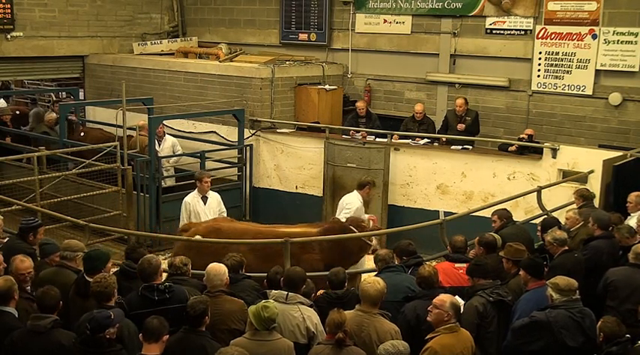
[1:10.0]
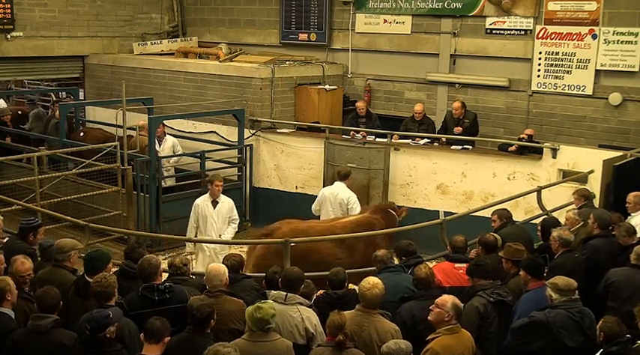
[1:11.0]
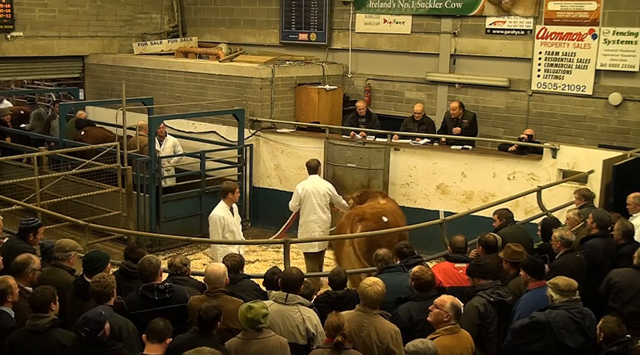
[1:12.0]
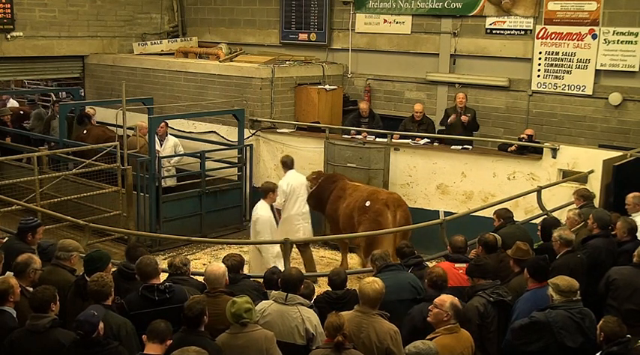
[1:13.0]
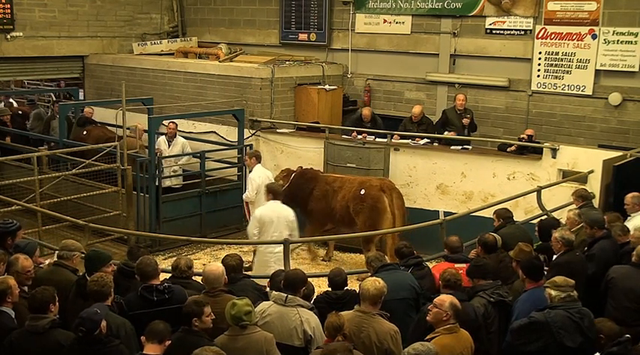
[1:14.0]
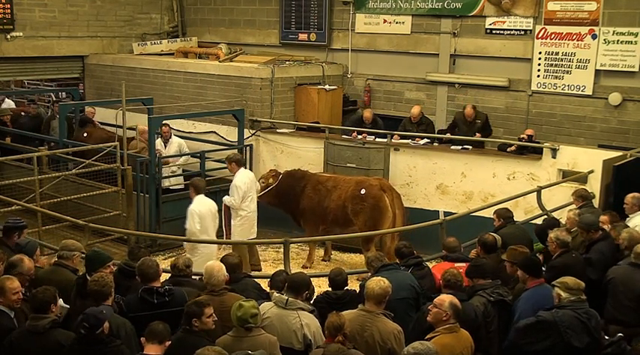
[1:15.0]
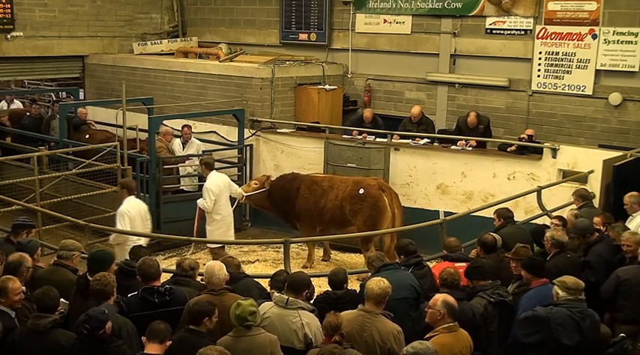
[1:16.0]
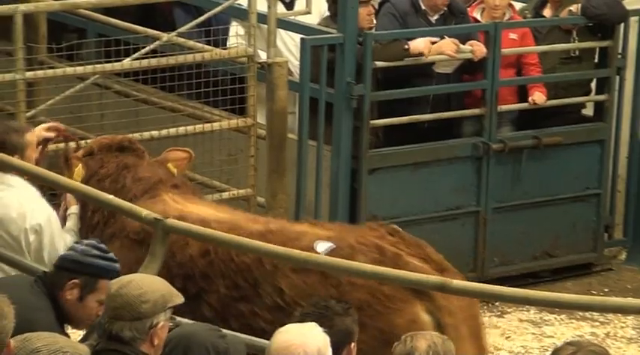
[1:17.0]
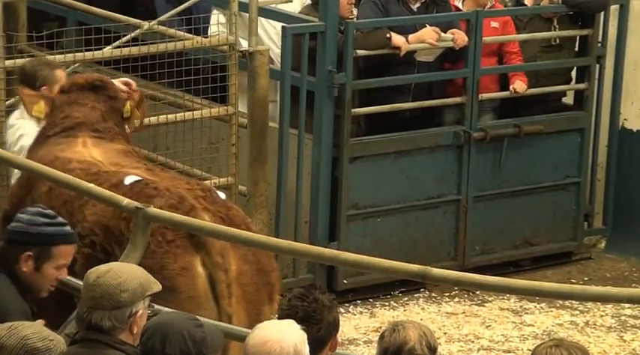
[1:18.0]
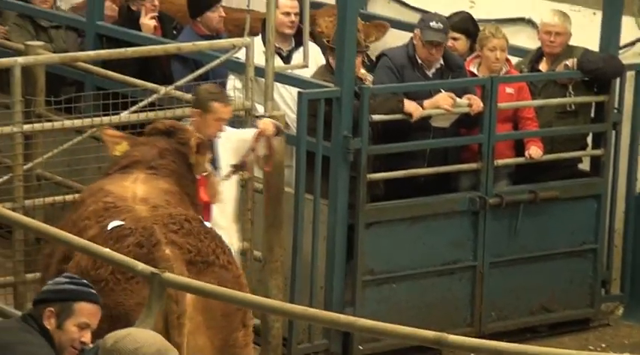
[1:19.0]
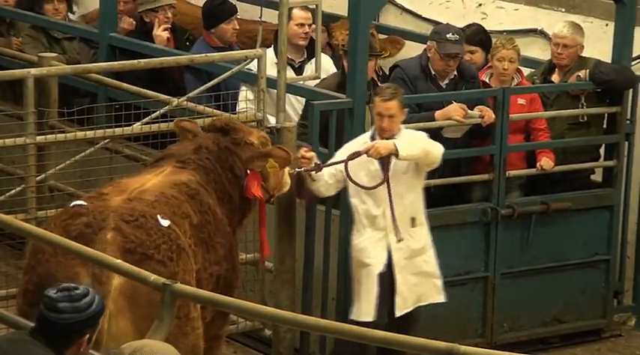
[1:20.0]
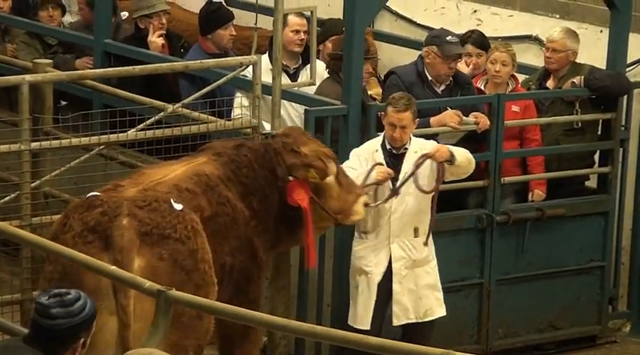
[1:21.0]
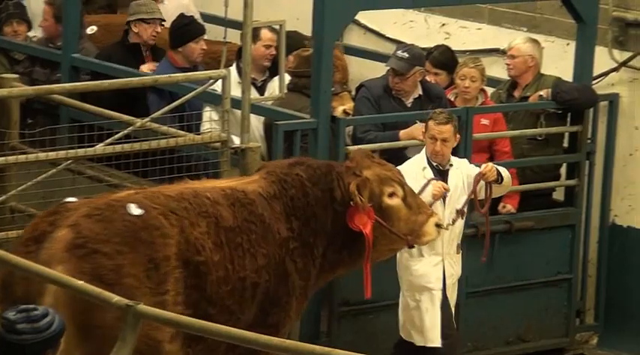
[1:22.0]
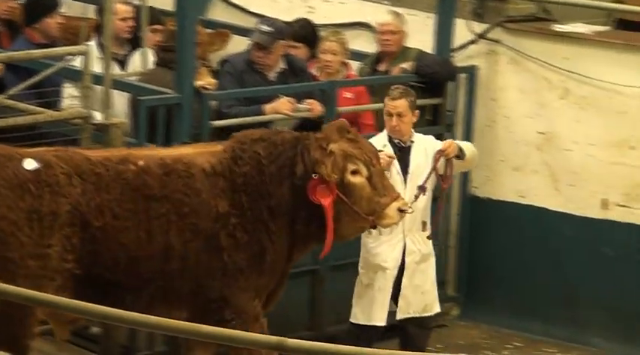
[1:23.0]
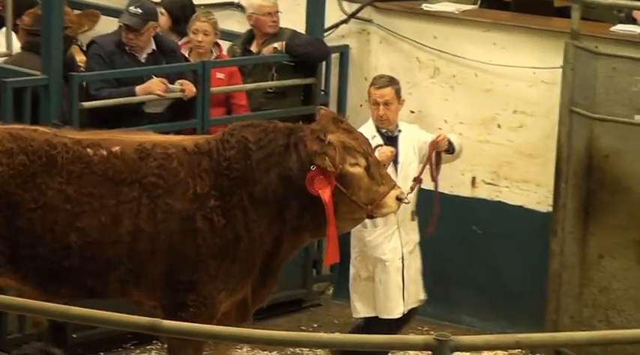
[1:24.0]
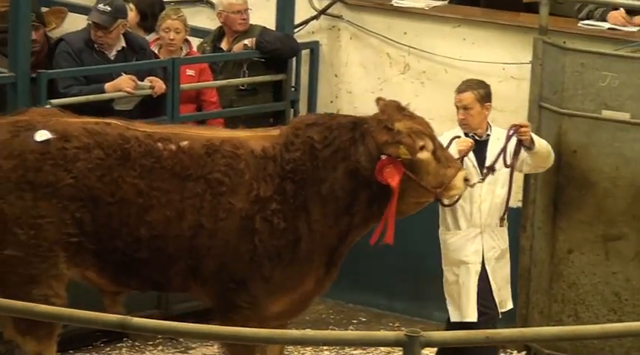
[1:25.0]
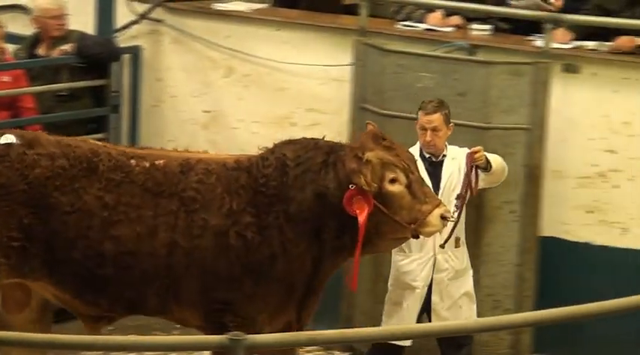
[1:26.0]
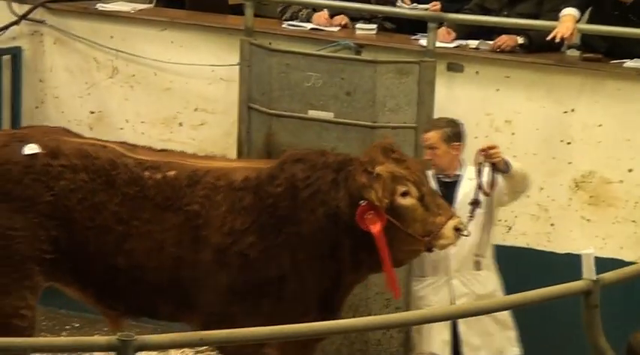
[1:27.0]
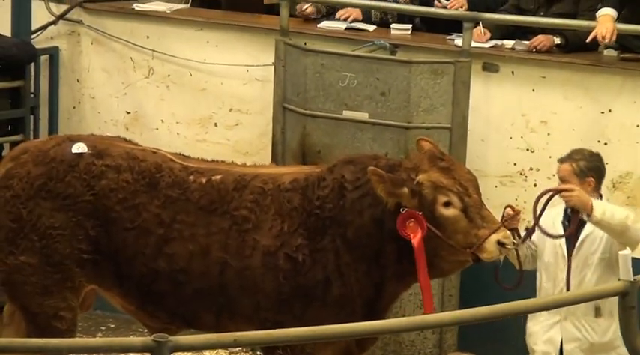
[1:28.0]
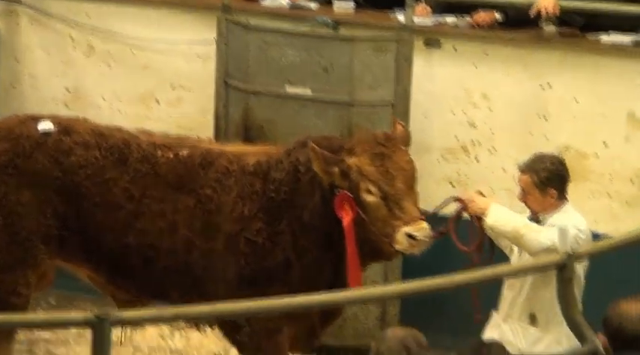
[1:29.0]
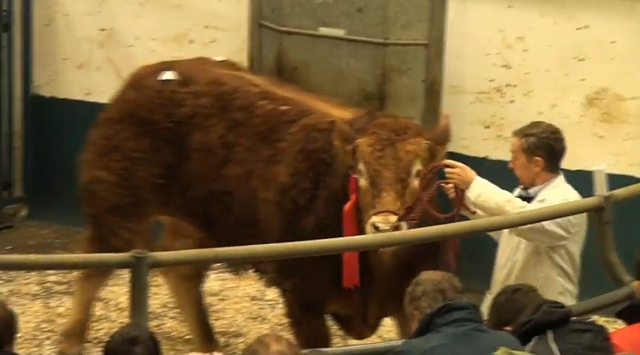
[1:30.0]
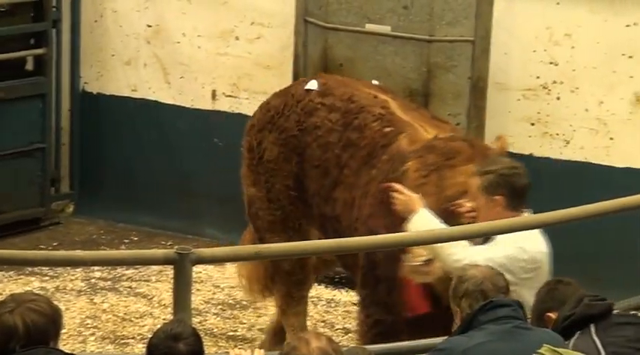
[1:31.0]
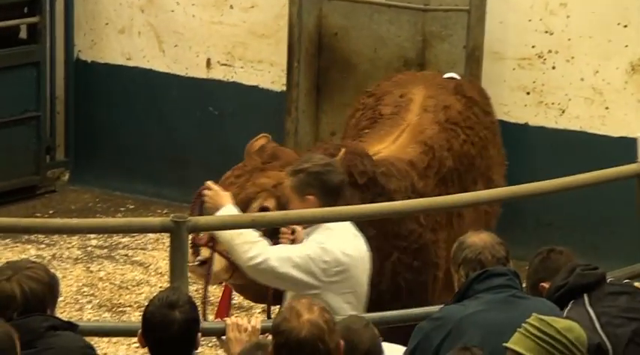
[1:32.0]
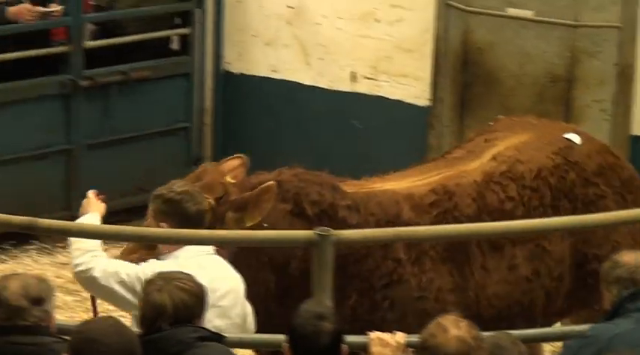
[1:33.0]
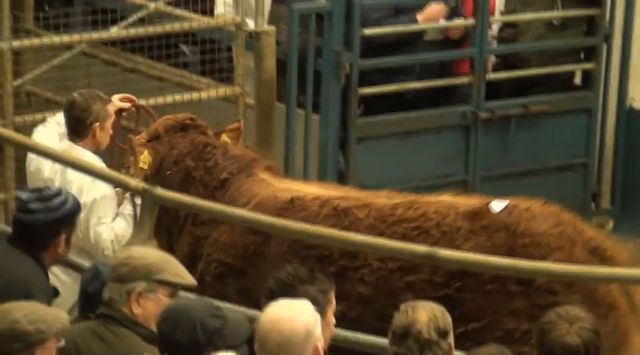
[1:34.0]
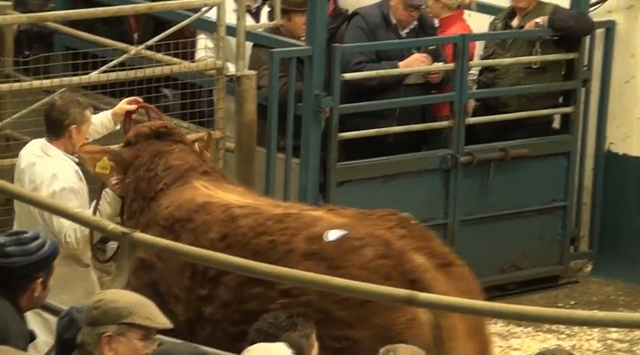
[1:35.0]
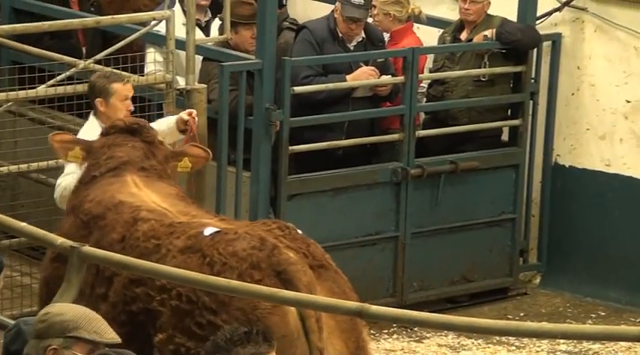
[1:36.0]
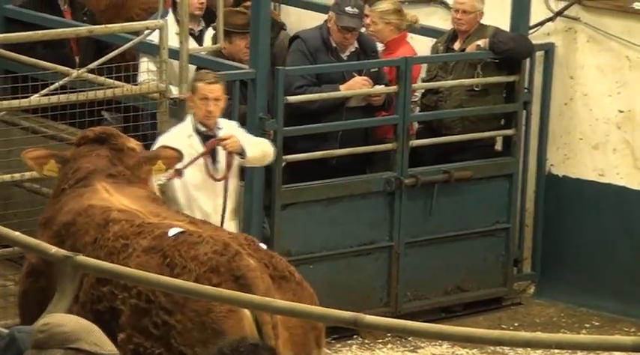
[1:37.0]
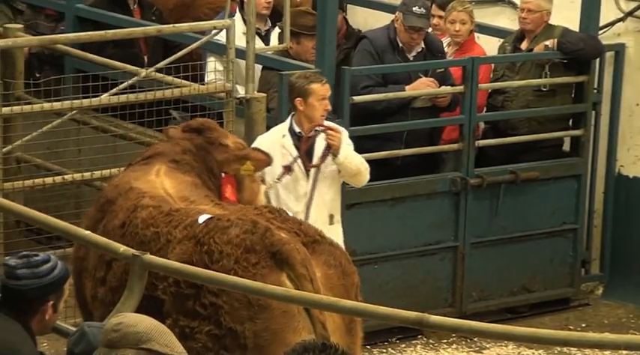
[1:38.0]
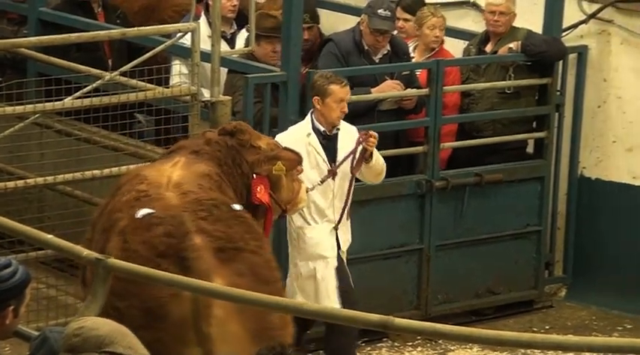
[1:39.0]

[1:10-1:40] The same two men take the same cow or bull in circles around the arena. The animal now has a red ribbon on it, possibly indicating it has won a prize. It now also has a line down its back where fur appears to have been shaved off; there is a very clear delineation down its back with no fur on it. One of the men in white jackets has a whole bunch of stuff shoved in his pockets.